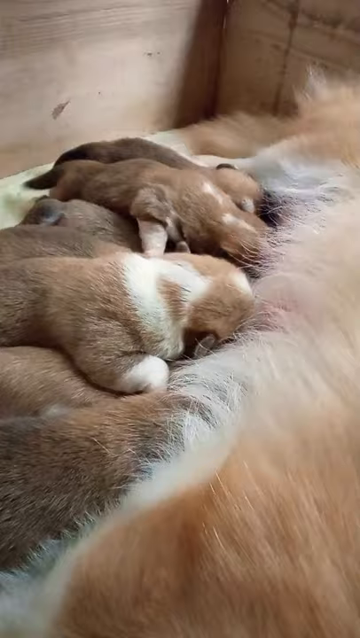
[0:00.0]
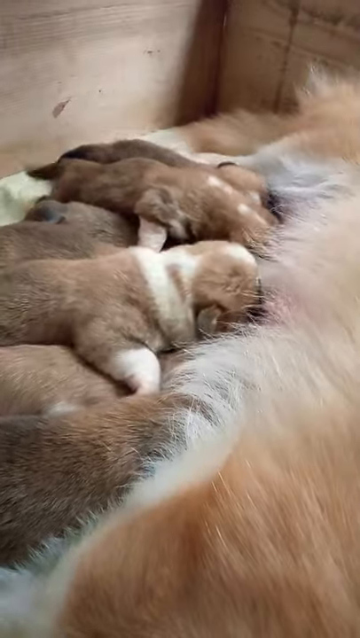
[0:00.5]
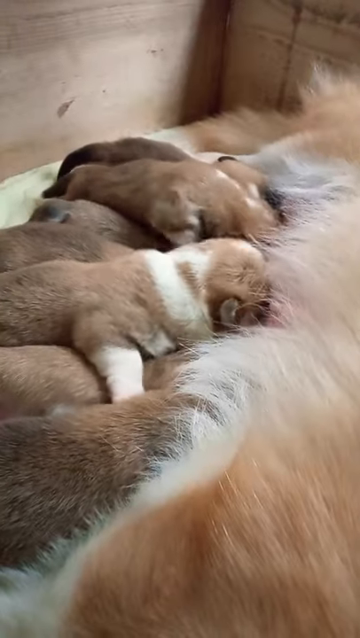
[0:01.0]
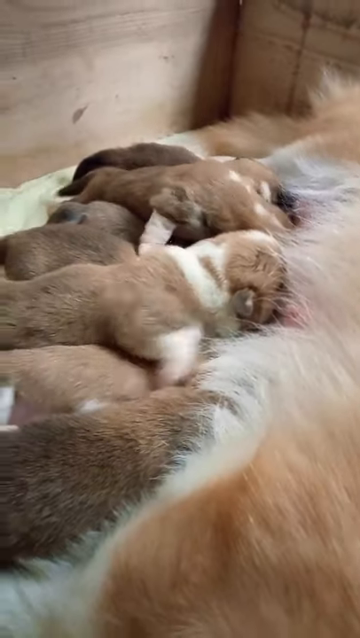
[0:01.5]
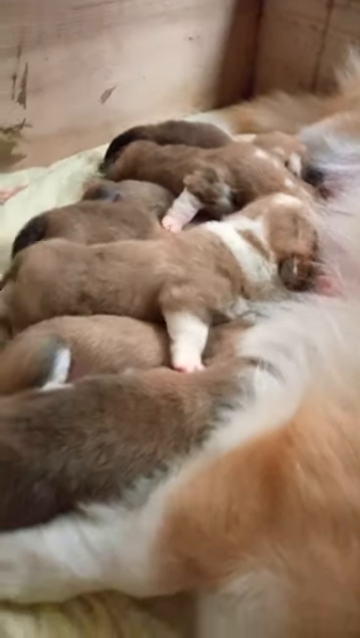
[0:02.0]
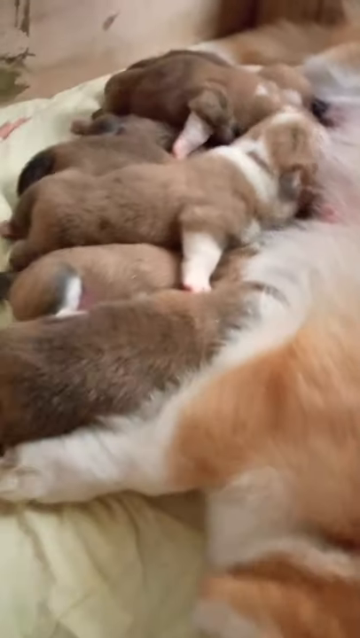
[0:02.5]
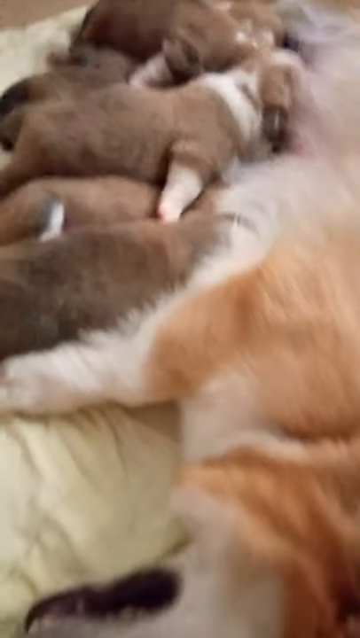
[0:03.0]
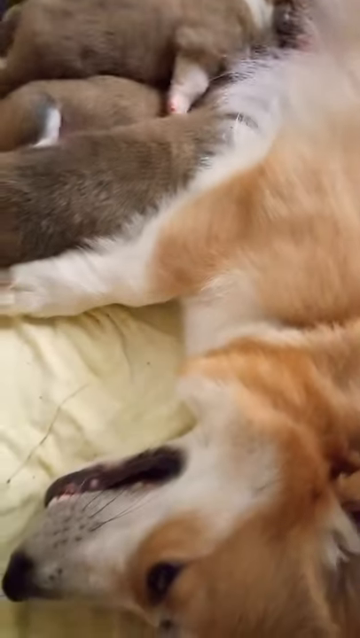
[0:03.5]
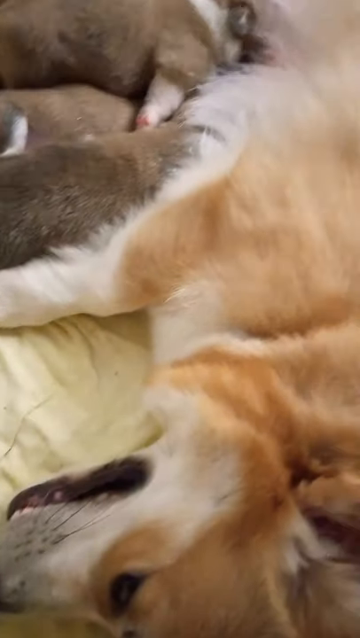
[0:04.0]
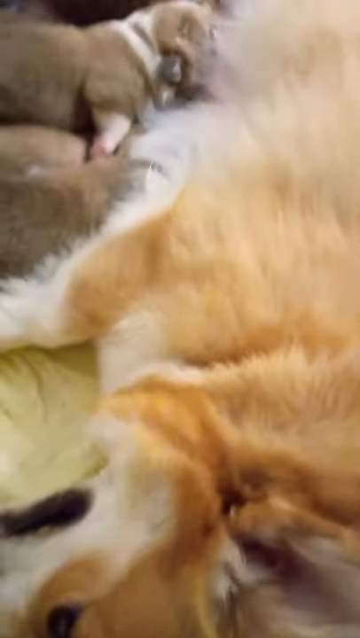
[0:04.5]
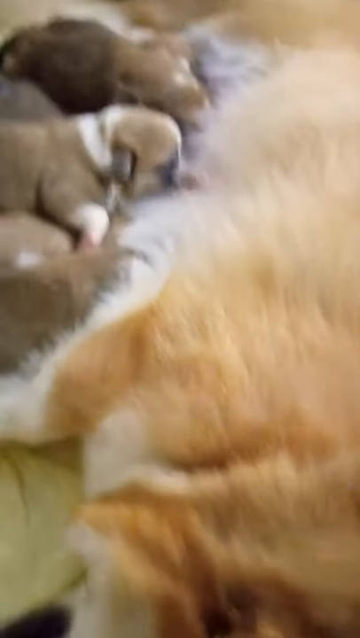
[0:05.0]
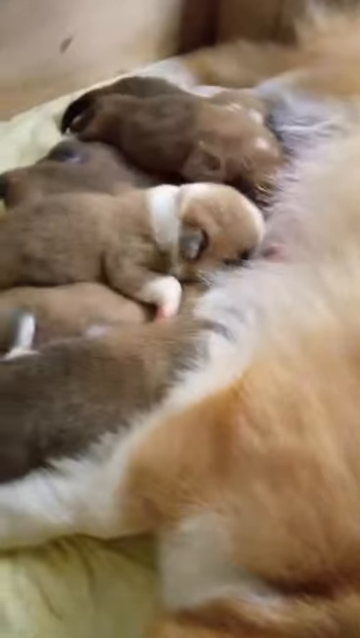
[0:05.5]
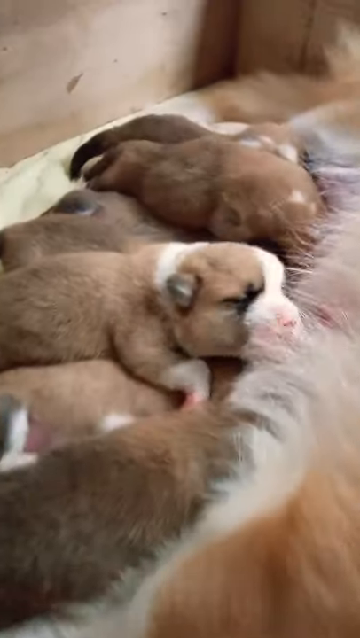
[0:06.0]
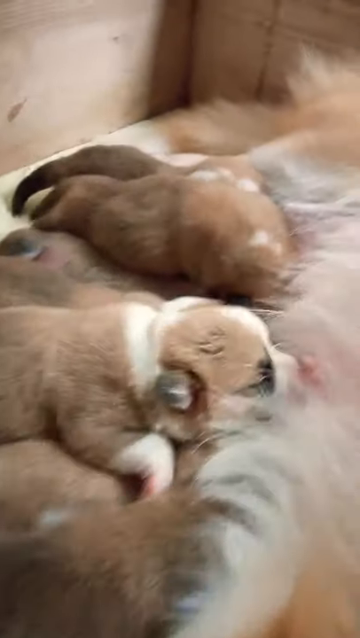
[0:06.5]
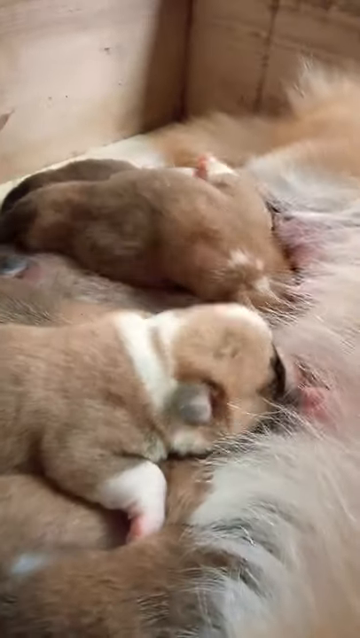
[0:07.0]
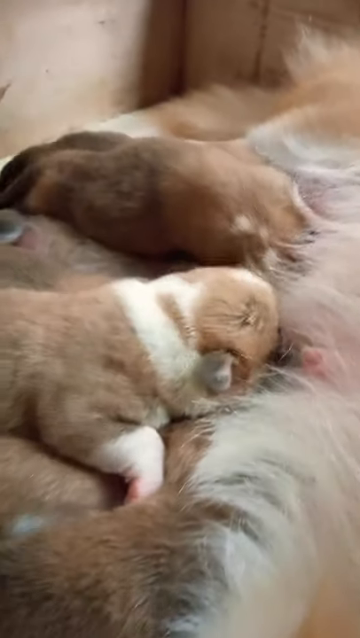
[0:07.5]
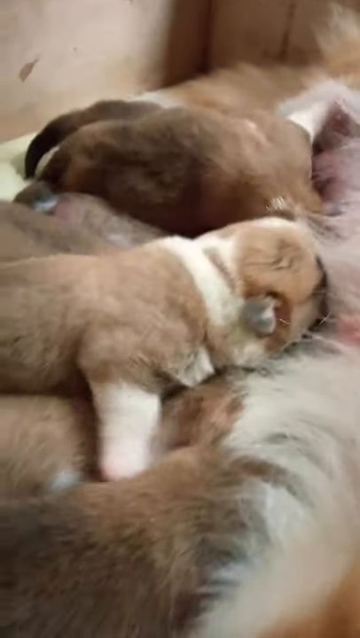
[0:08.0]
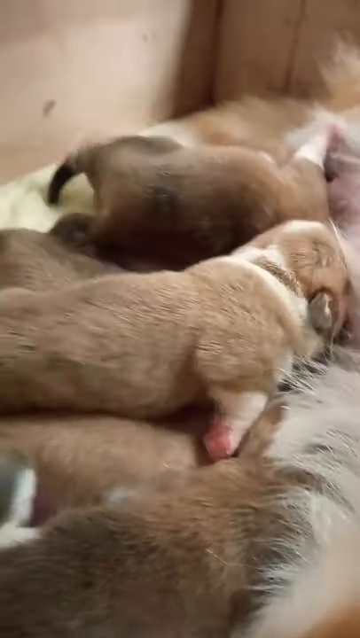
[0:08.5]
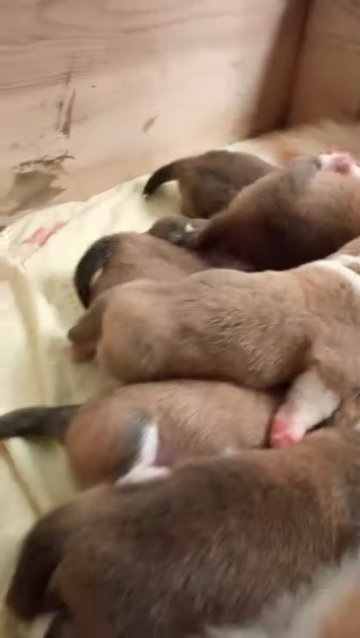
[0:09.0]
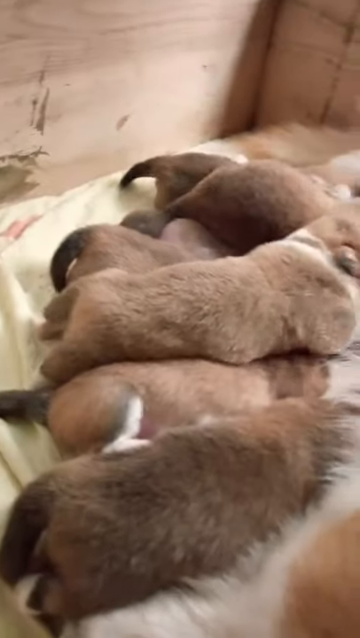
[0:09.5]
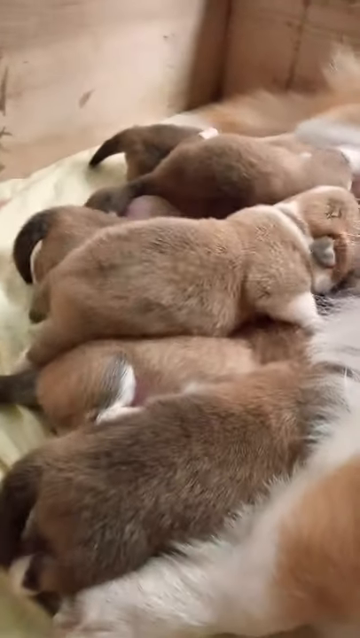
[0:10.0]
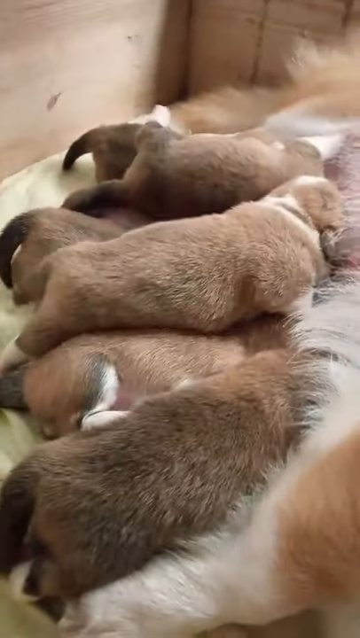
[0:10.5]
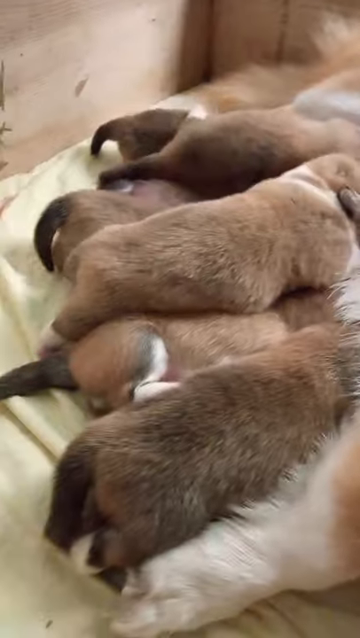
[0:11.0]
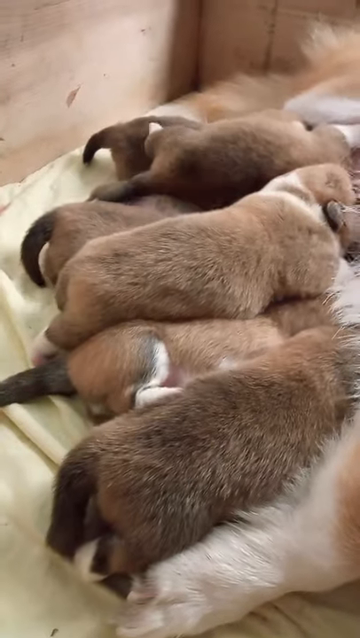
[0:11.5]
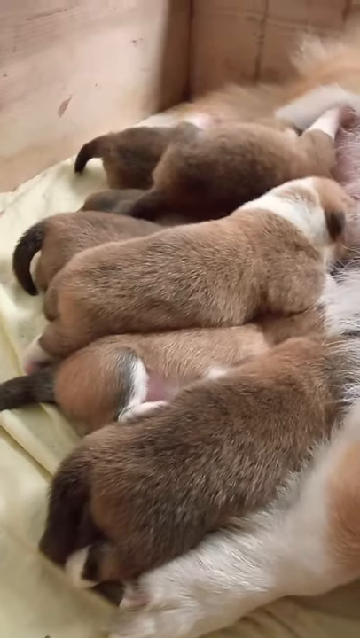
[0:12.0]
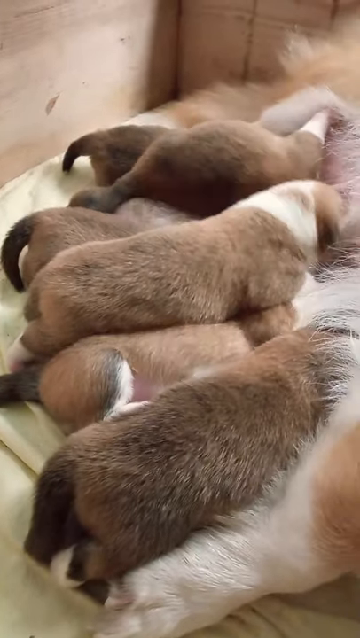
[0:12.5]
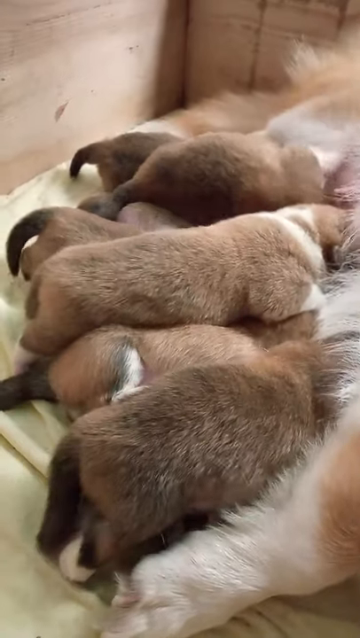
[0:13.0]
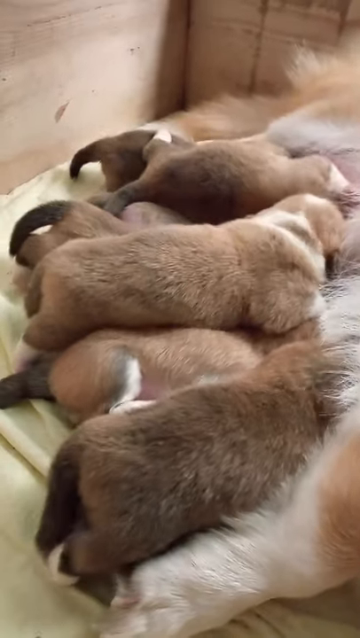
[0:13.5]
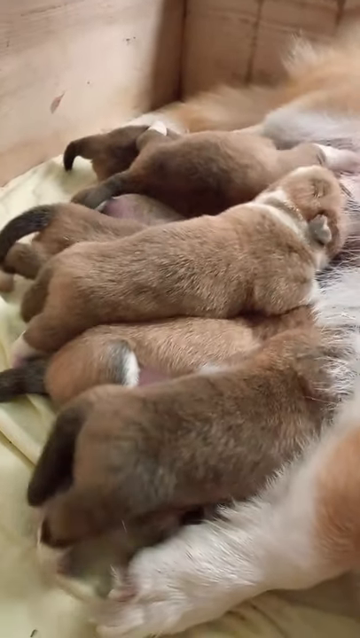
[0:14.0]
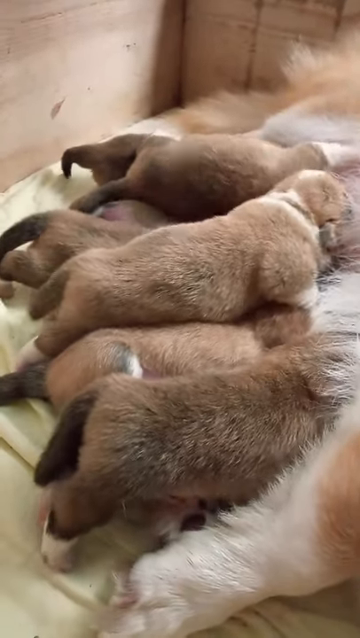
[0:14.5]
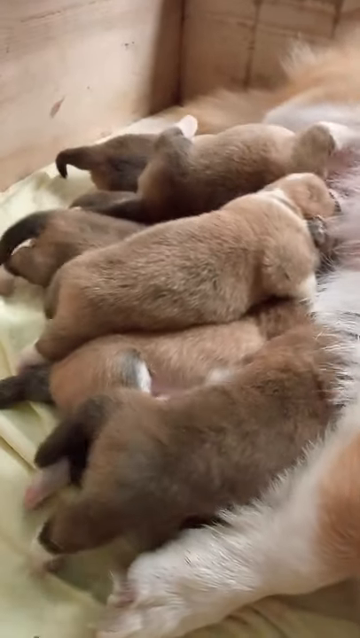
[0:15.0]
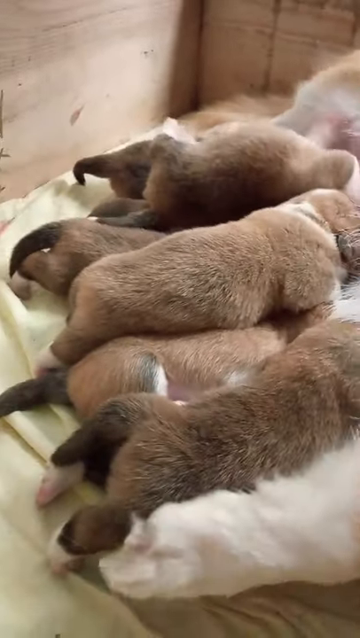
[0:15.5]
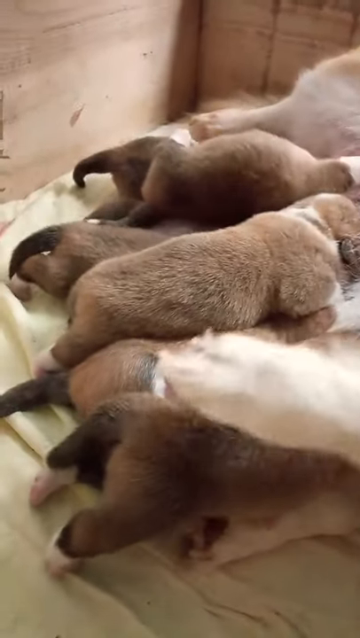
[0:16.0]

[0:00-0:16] Recently born puppies, apparently seven of them, nurse from their mother. Their faces cannot really be seen because they are sucking milk, and they feed eagerly, climbing over one another to get to the milk. The breed of the dogs is unidentified.